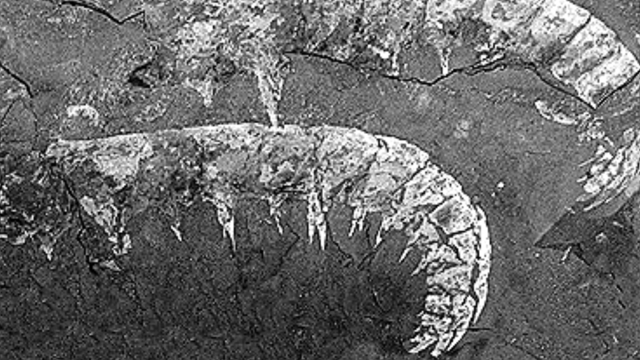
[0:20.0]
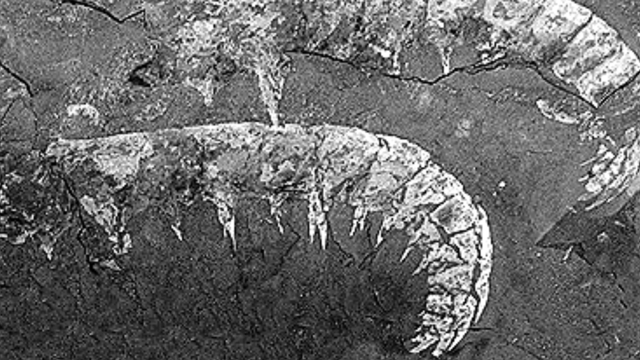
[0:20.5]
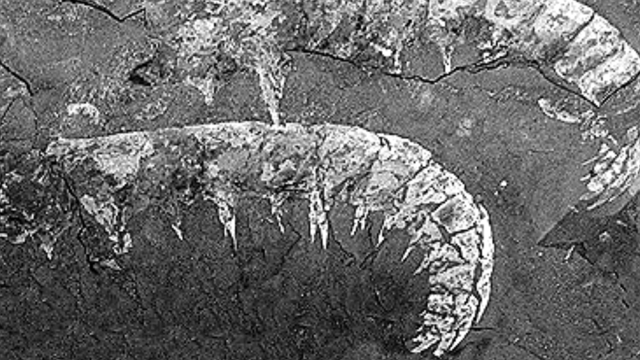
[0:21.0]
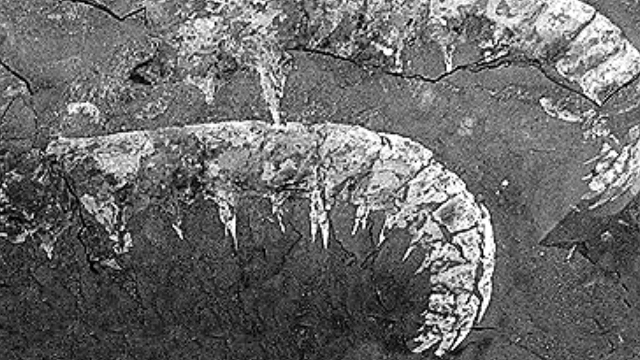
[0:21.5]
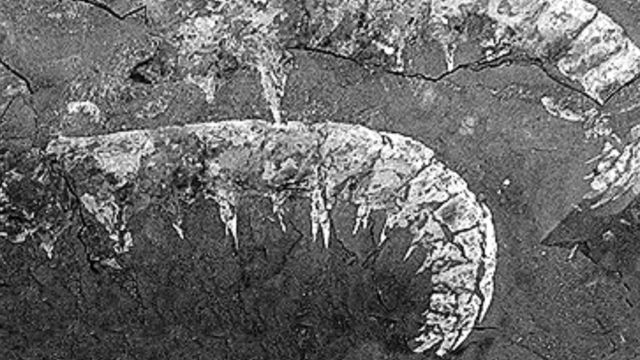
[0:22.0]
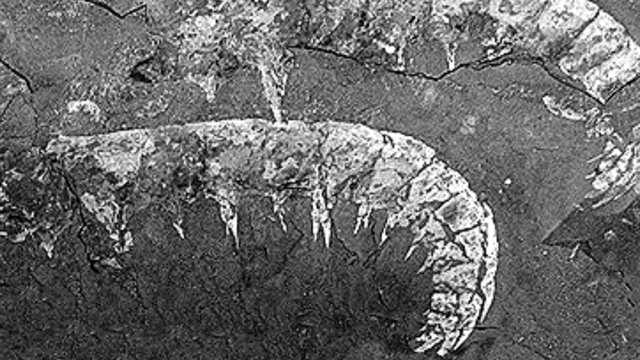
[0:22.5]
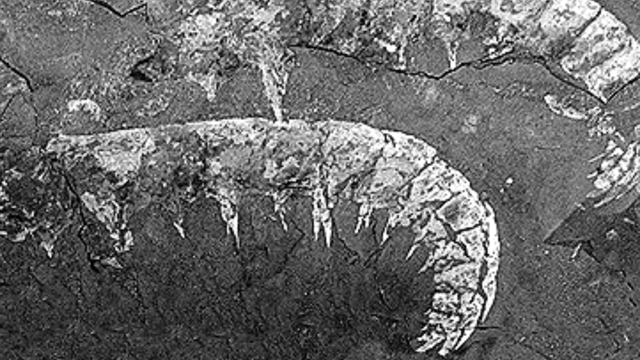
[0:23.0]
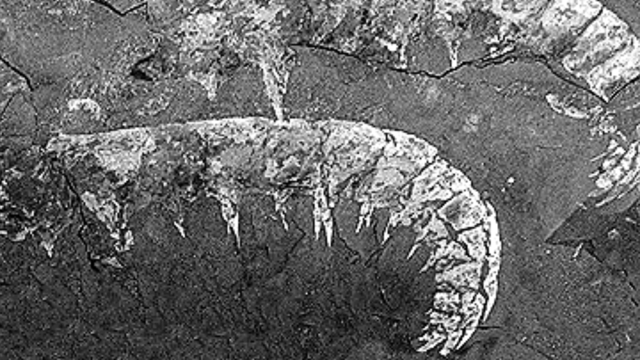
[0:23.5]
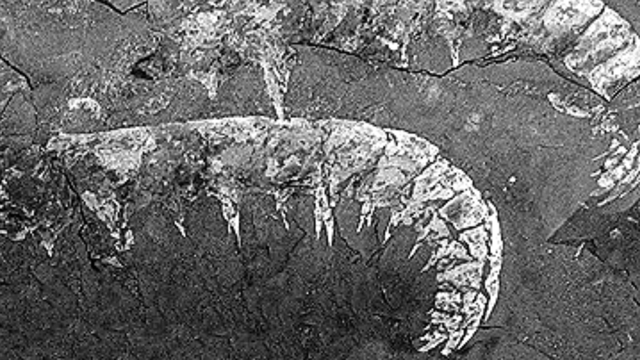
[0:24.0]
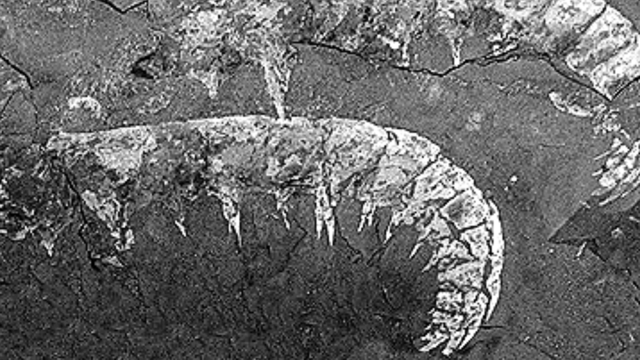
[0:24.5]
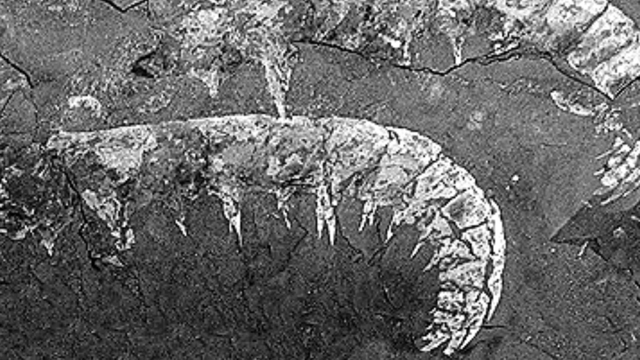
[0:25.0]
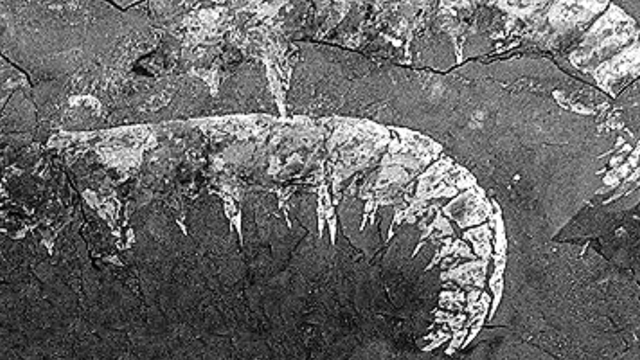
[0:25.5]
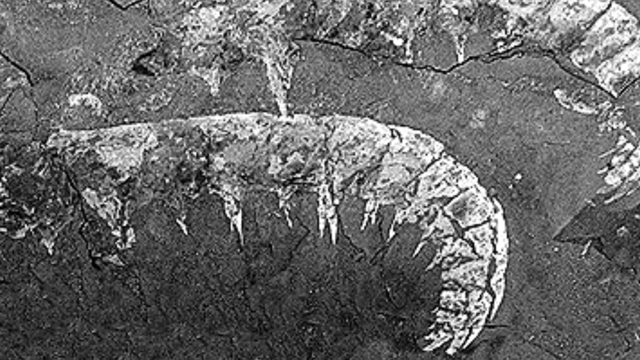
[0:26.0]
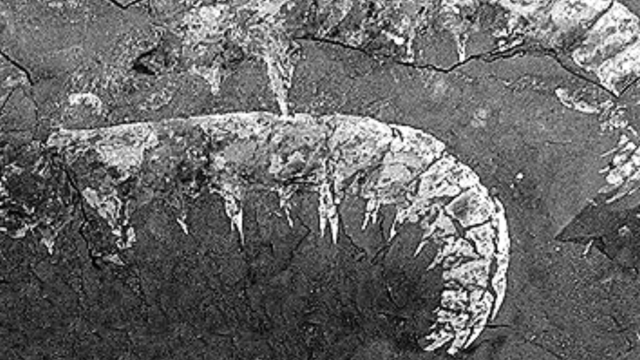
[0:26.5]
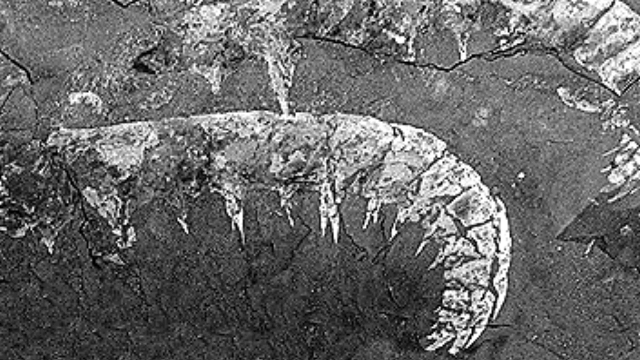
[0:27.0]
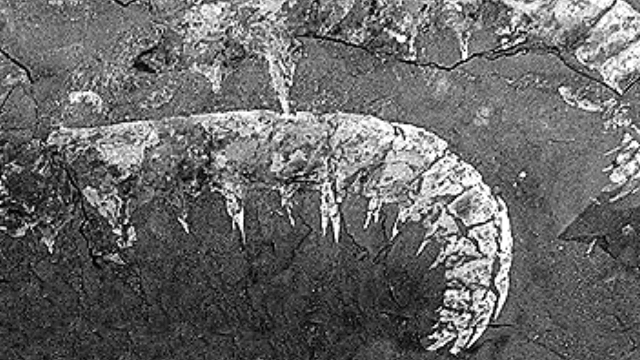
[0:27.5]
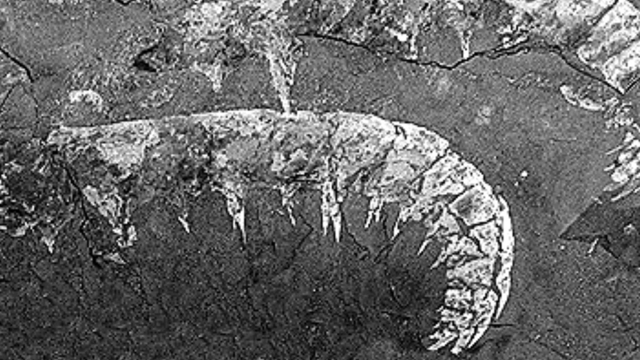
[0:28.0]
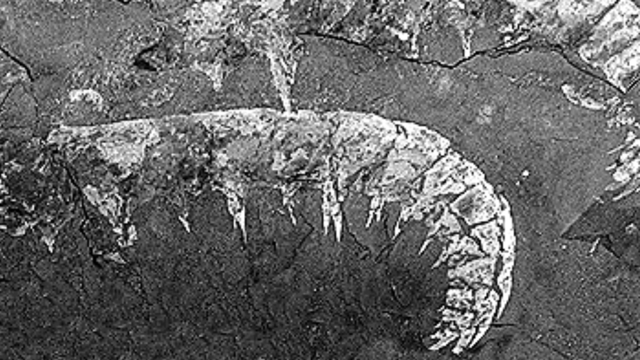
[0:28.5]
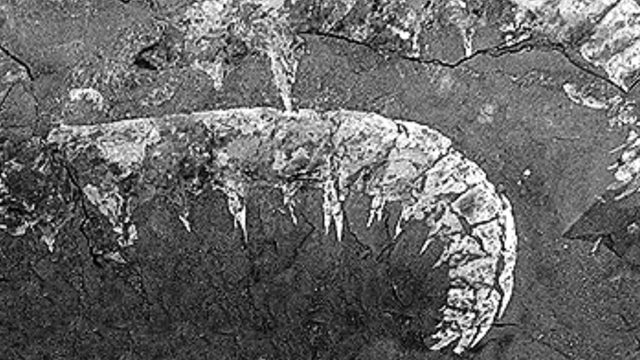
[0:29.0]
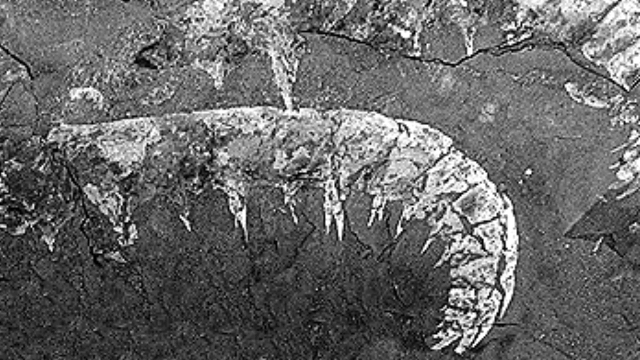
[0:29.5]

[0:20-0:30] The centipede fossils look like they are embedded in rock or stone, and the image has a gray or black-and-white appearance. The centipedes face the left side of the screen, one on top of the other, and their tails appear to curl downward toward the bottom of the screen. The video pans to a closer view. The top centipede is halfway out of the frame, while the centipede in the lower half is shown more close up. The bottom fossil appears to have nine sets of short legs.